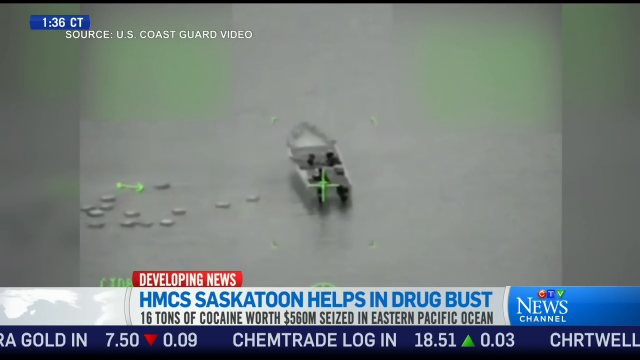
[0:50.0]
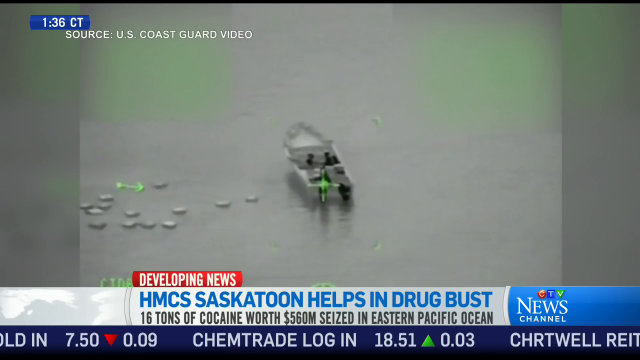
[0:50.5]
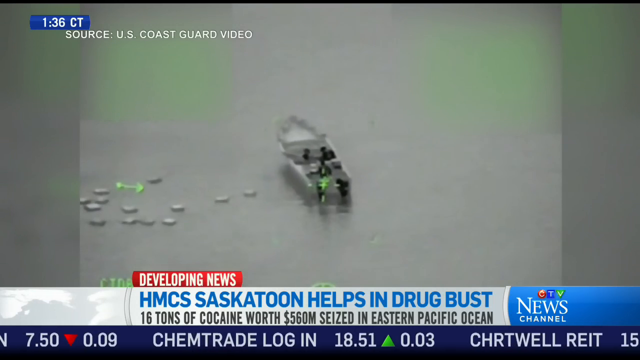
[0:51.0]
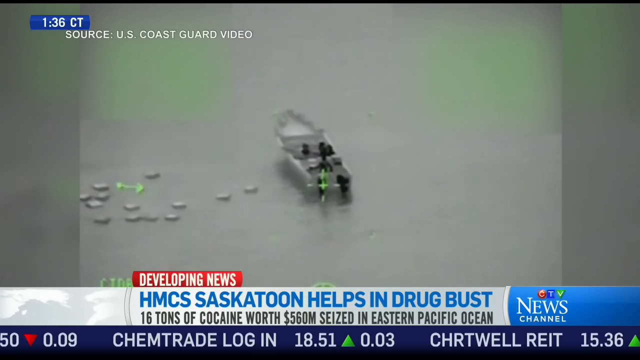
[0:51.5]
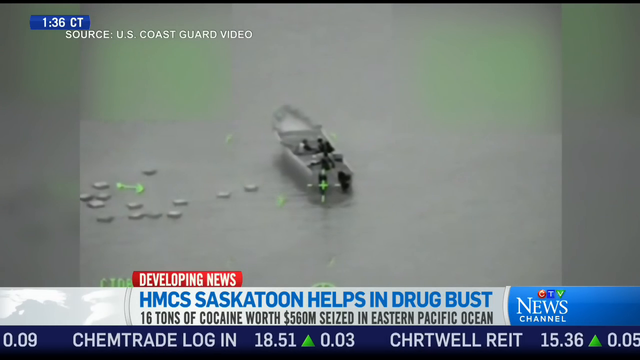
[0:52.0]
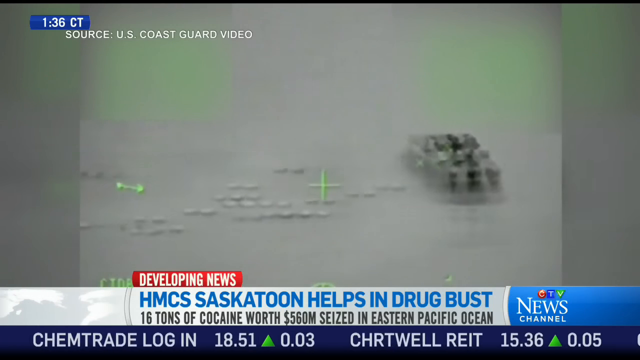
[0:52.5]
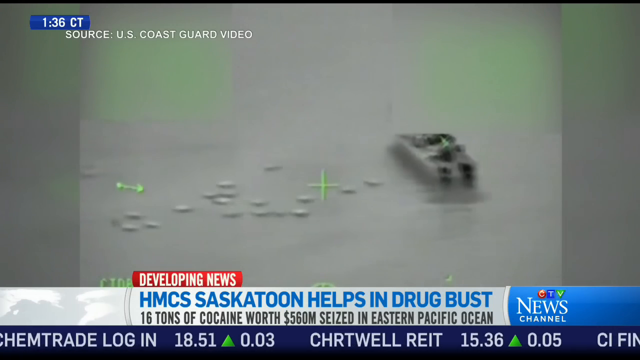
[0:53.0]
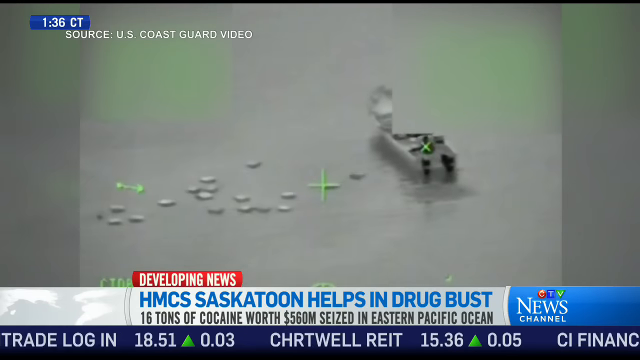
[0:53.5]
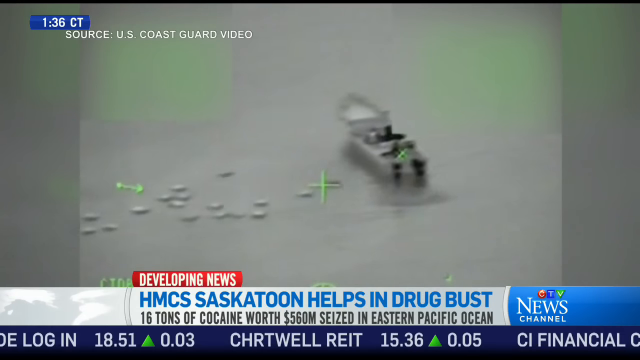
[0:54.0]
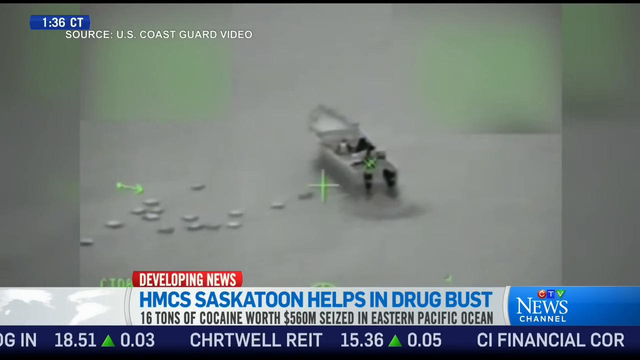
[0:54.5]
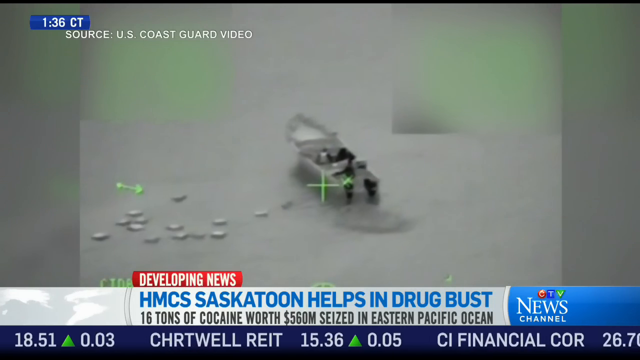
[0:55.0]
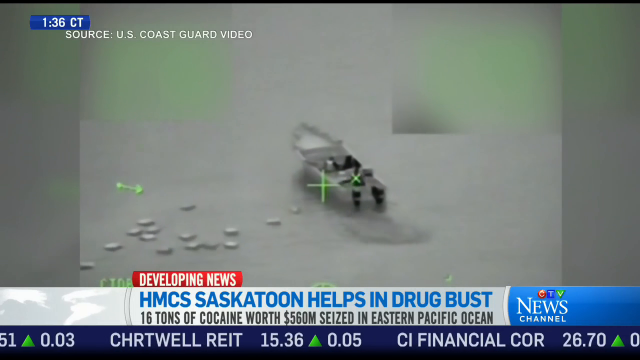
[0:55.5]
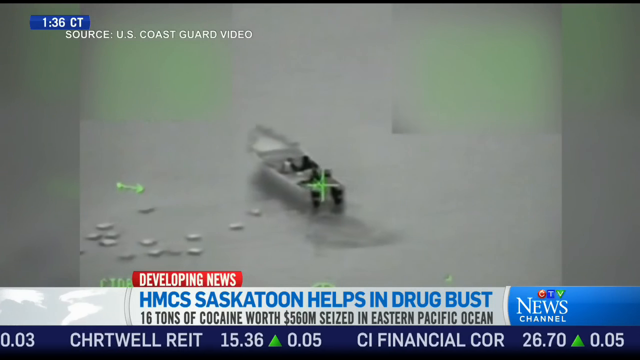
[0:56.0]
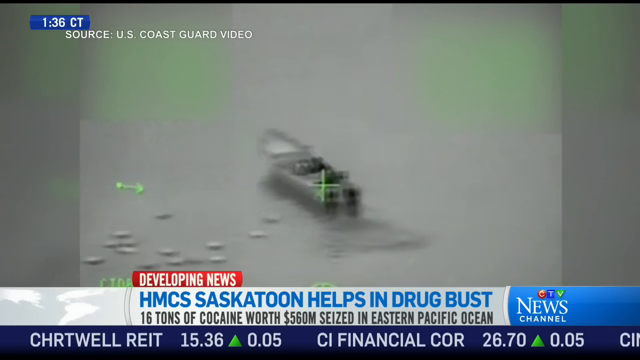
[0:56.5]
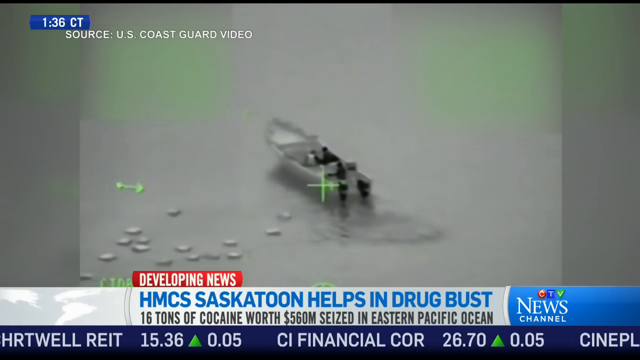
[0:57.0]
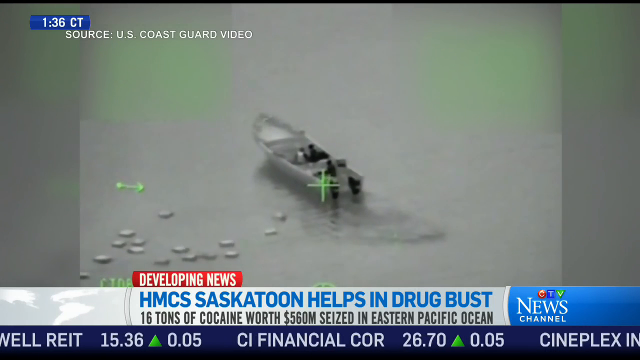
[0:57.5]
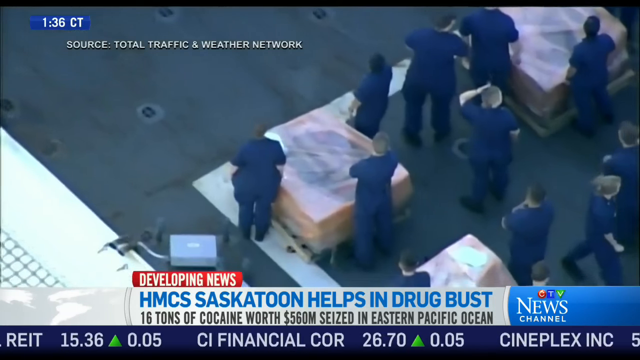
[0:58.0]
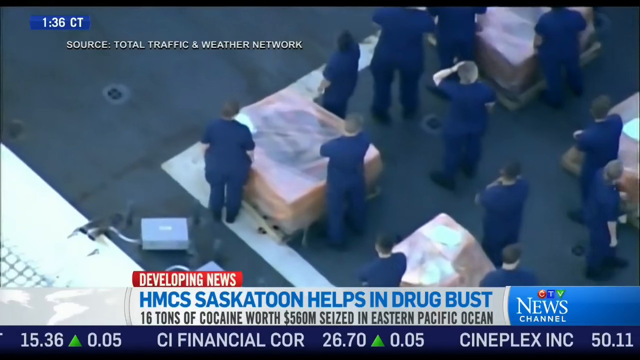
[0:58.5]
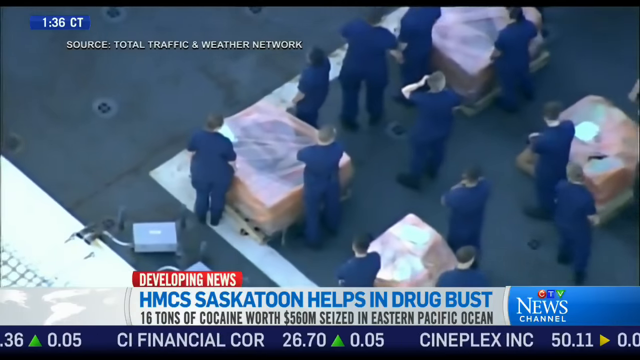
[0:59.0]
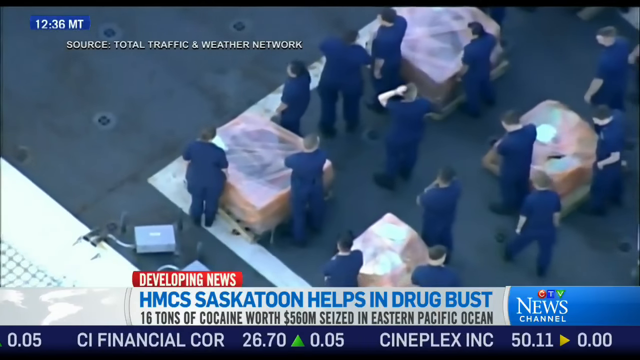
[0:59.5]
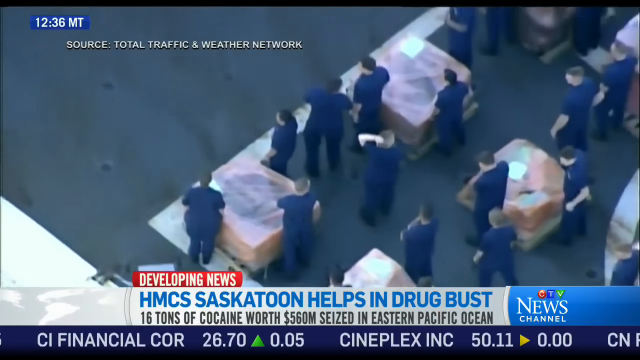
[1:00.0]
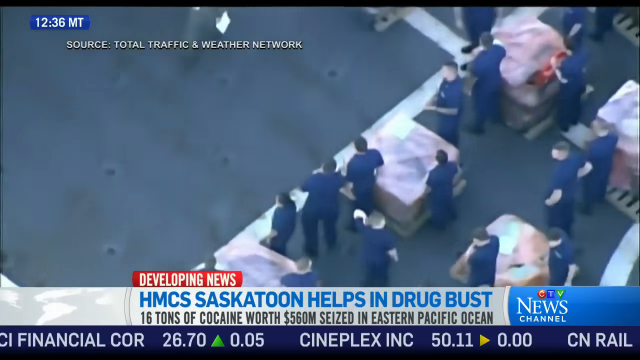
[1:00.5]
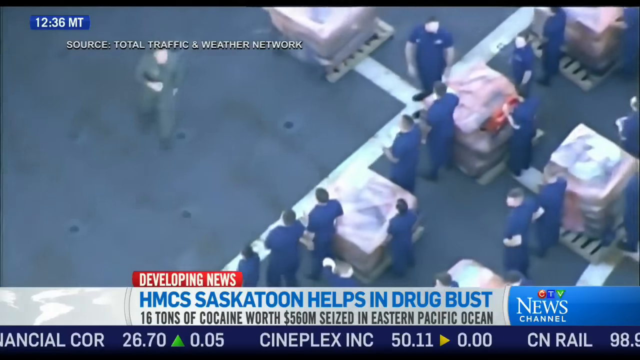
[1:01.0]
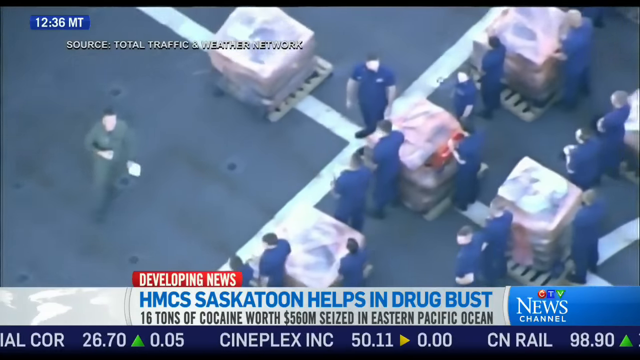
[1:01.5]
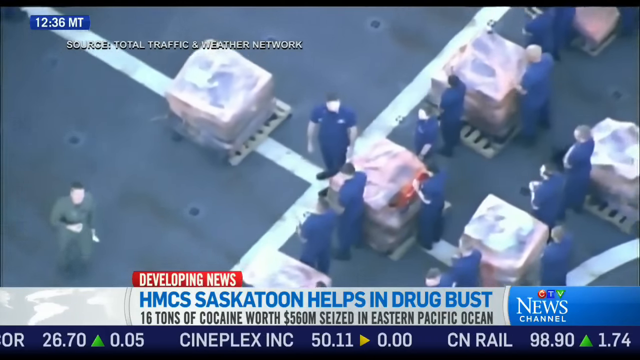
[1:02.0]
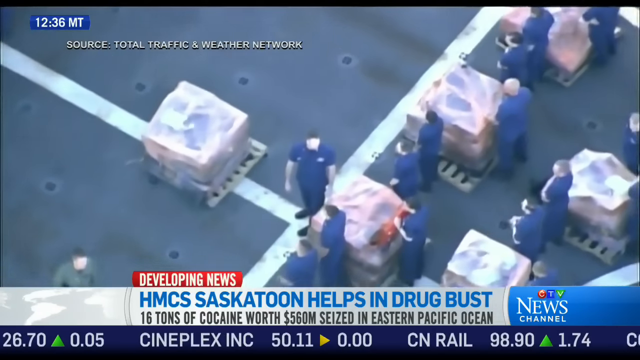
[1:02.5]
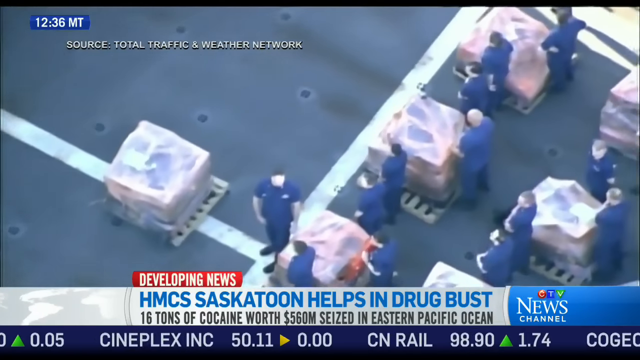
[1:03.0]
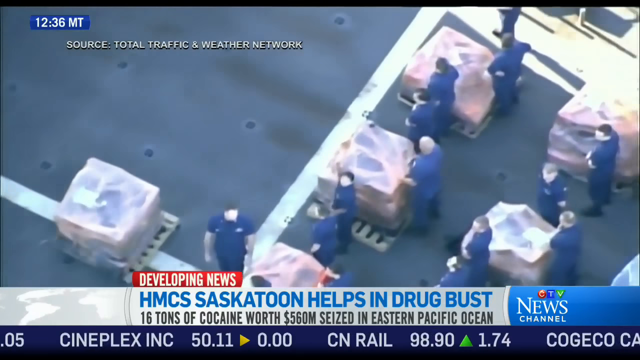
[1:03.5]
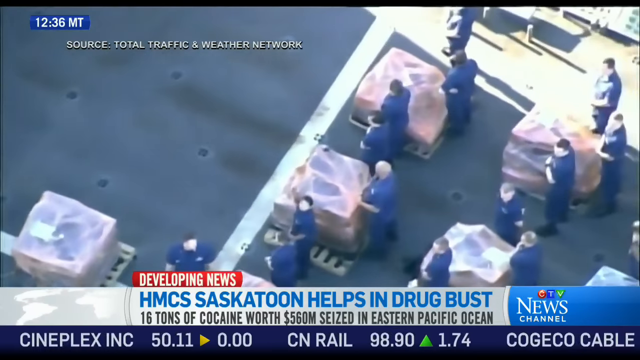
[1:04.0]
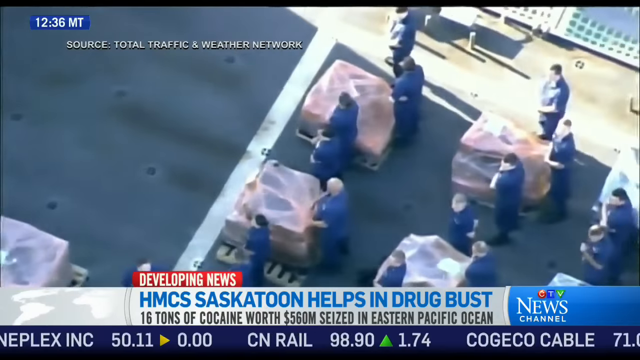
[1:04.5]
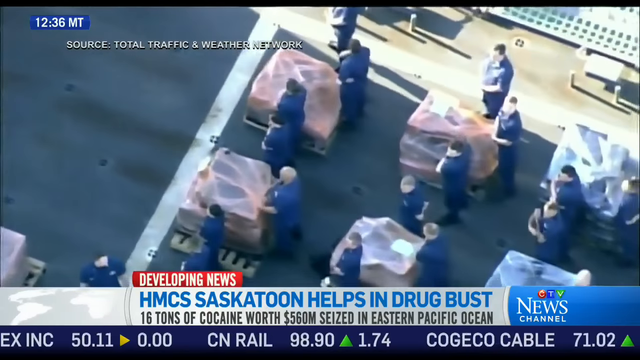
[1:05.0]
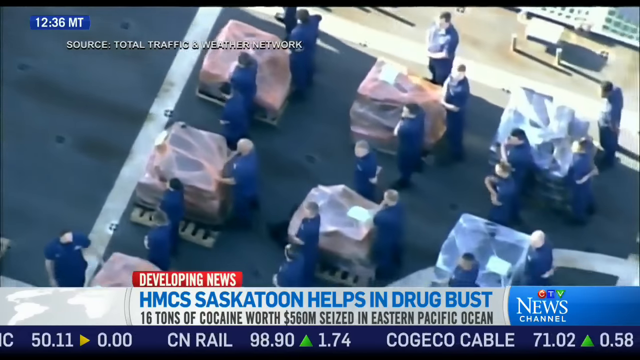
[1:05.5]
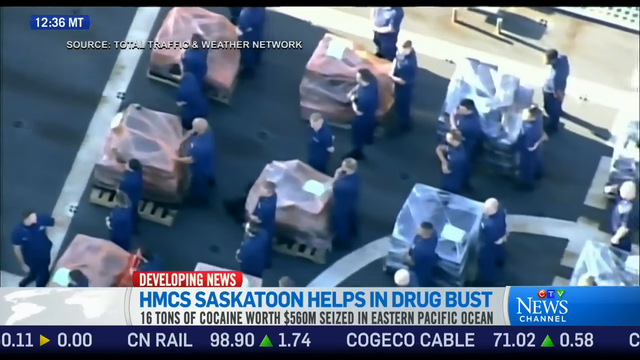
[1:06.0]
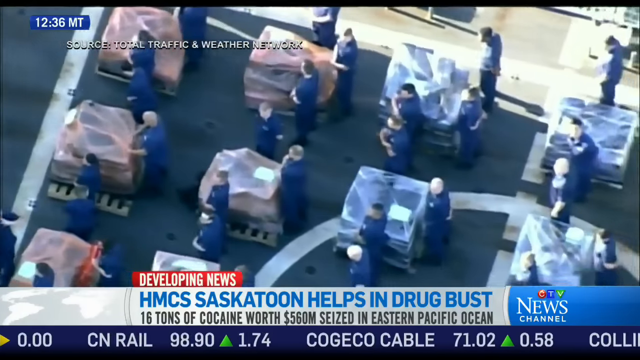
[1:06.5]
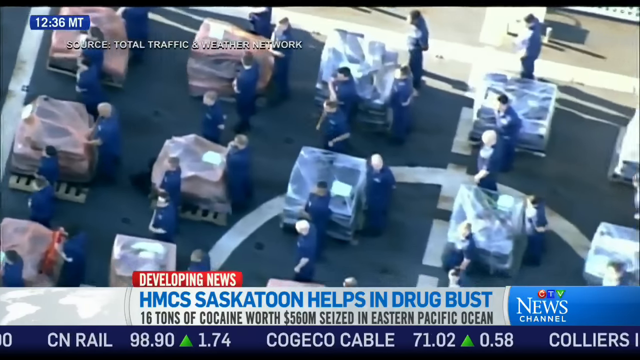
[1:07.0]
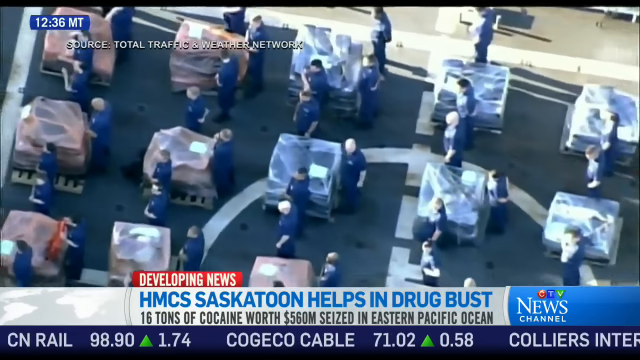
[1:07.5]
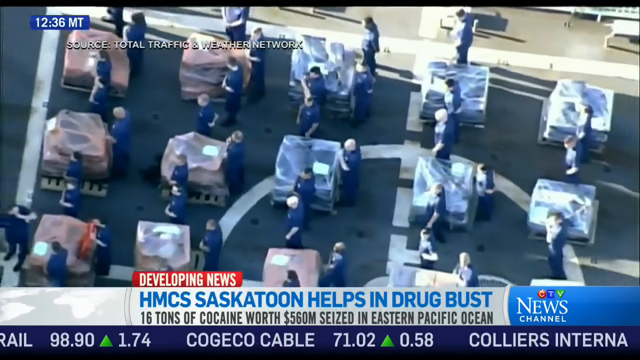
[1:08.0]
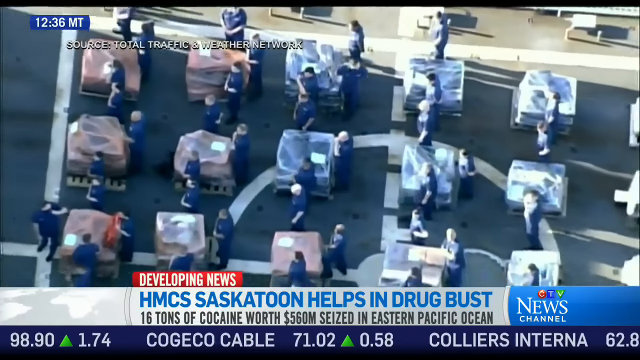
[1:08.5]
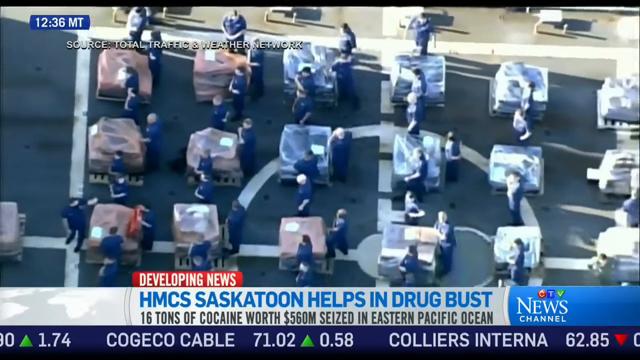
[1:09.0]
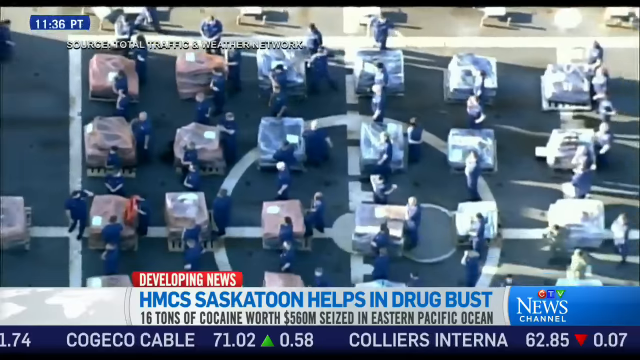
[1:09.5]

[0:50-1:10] The news station airs footage from a developing story. At the bottom, "developing news" appears in red, followed by "HMCS Saskatoon helps in drug bust. 16 tons of cocaine worth $560 million seized in the Eastern Pacific Ocean." At the top is the source, "US Coast Guard video." The overhead video shows a boat idling; it looks like it is fishing things out of the water, like cartons or crates of drugs, like bricks. Another overhead video clip shows a bunch of pallets and a lot of people on the deck of a larger boat, probably the Coast Guard, going through and analyzing what is contained in the pallets, which are probably what was fished out of the water.